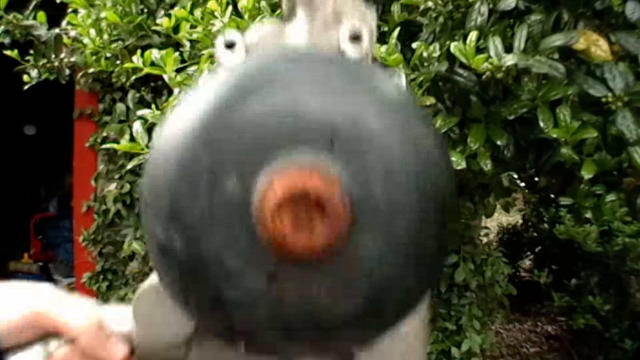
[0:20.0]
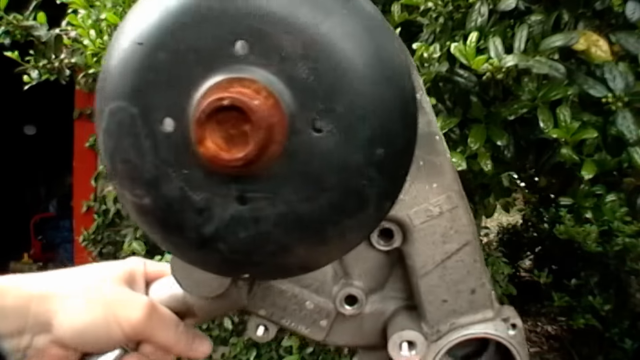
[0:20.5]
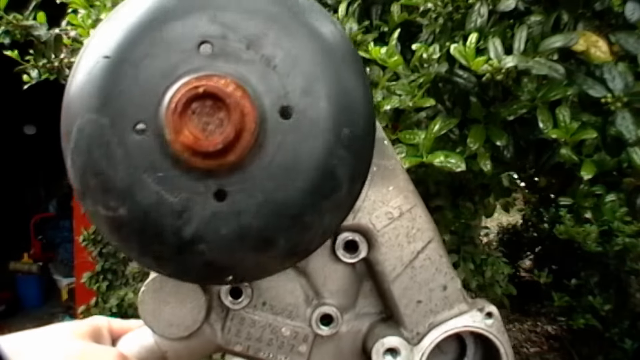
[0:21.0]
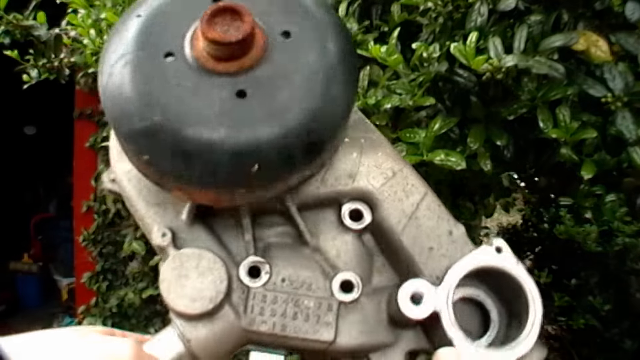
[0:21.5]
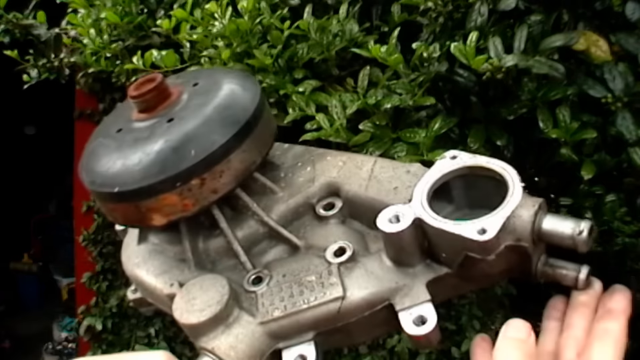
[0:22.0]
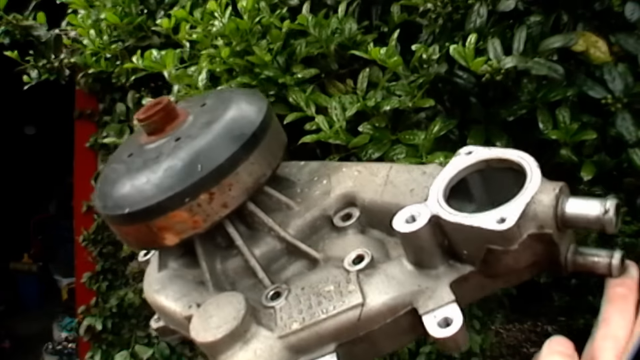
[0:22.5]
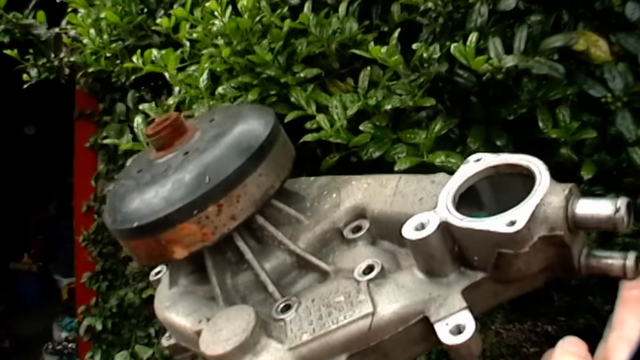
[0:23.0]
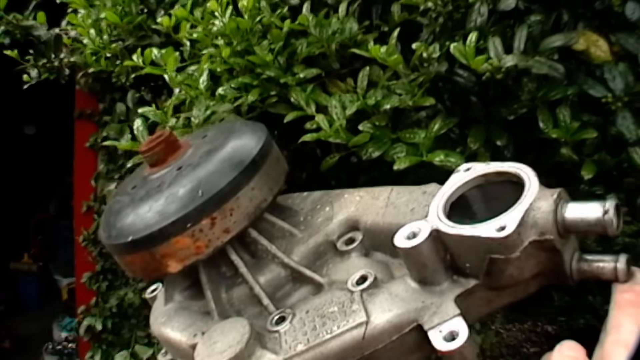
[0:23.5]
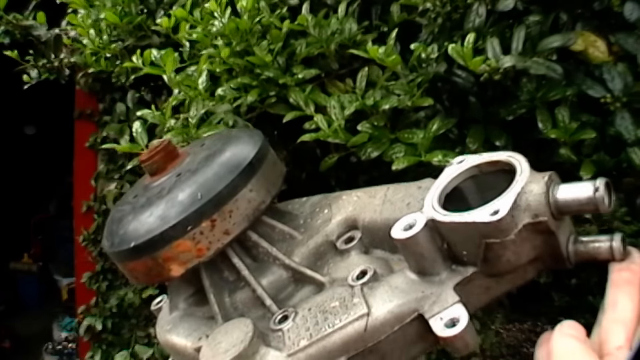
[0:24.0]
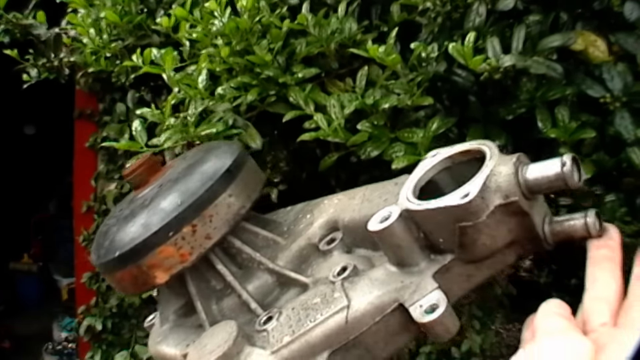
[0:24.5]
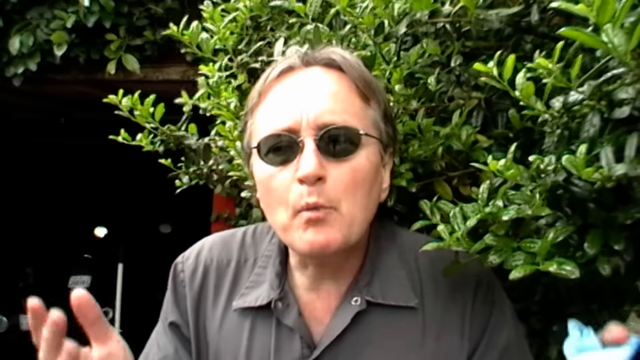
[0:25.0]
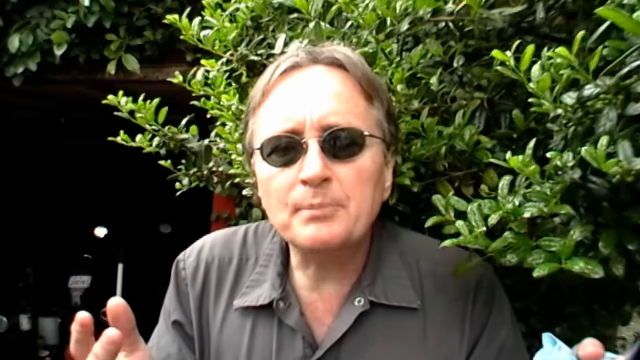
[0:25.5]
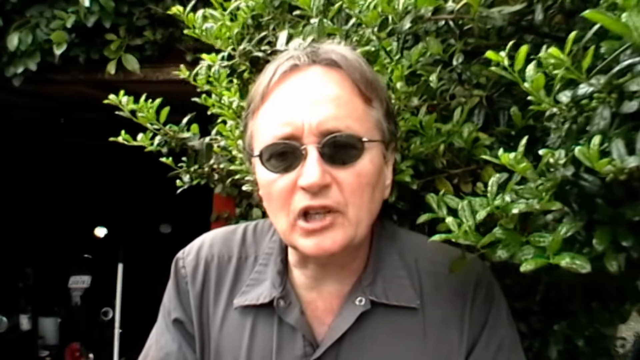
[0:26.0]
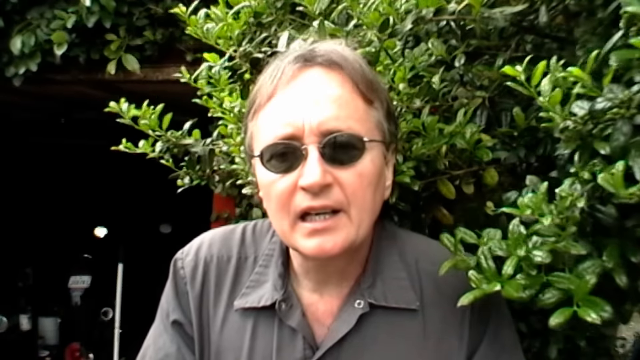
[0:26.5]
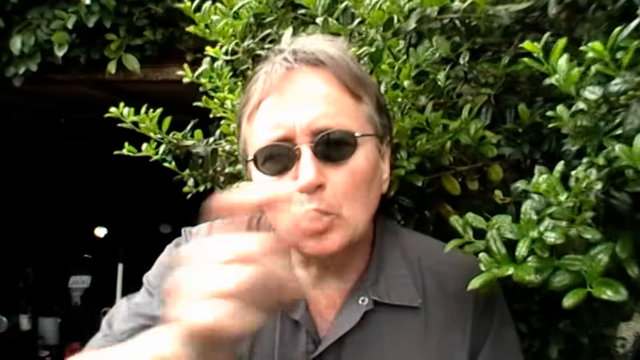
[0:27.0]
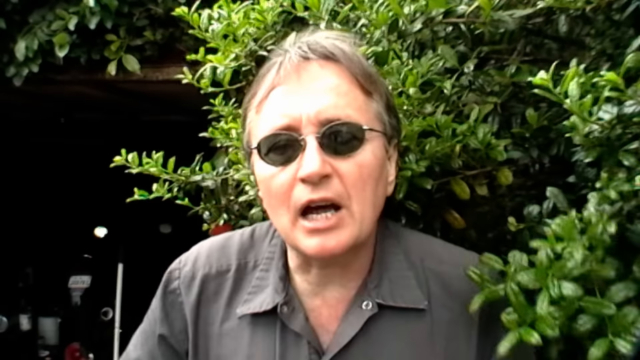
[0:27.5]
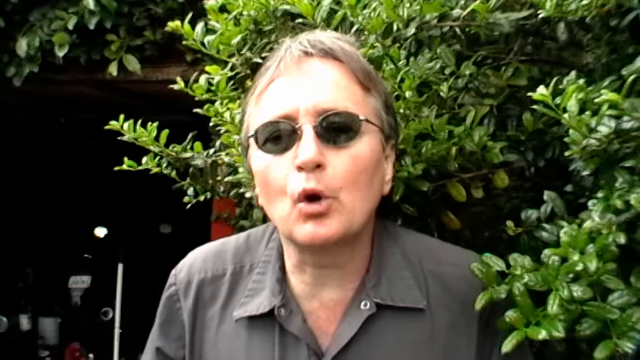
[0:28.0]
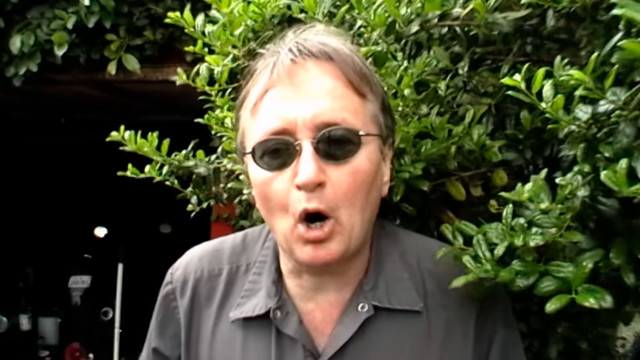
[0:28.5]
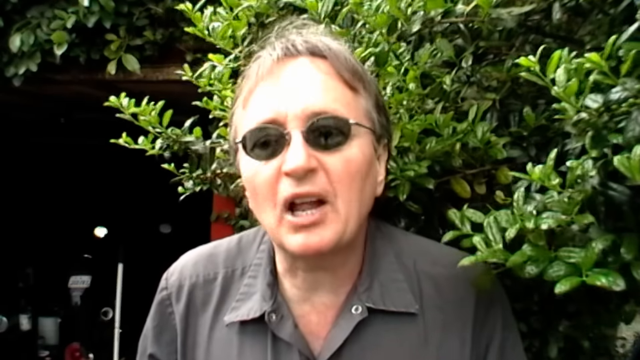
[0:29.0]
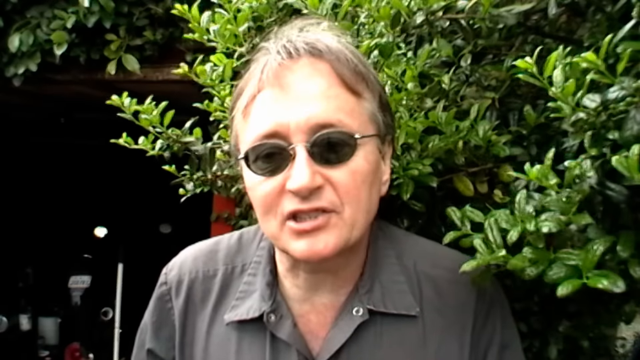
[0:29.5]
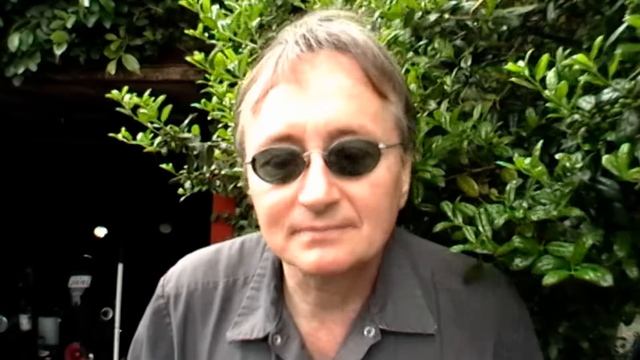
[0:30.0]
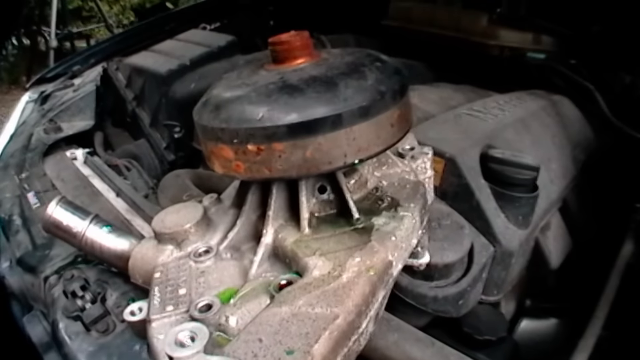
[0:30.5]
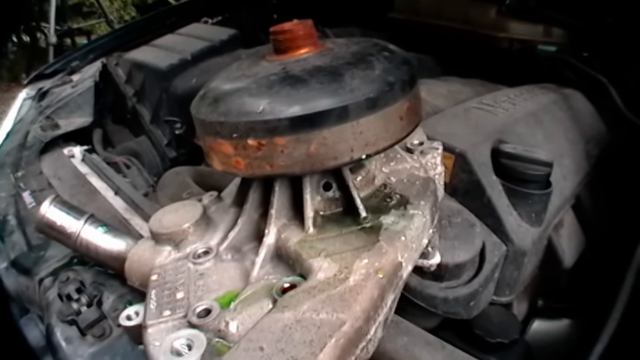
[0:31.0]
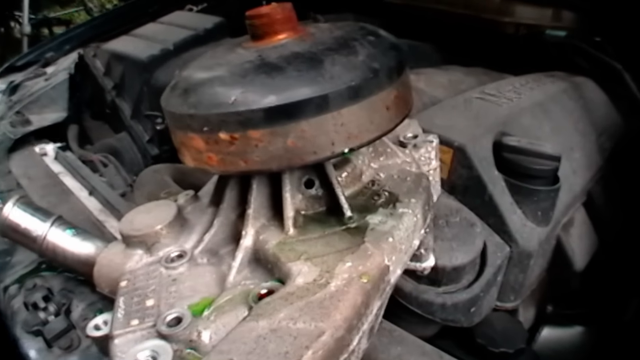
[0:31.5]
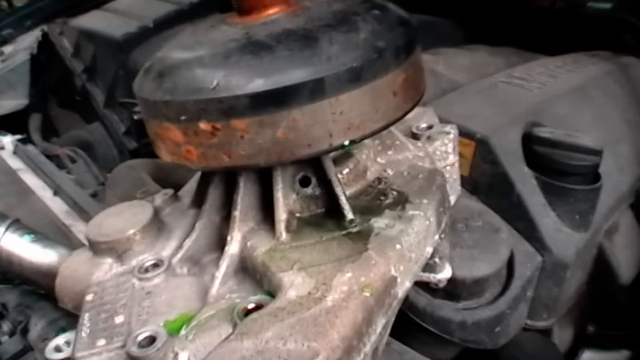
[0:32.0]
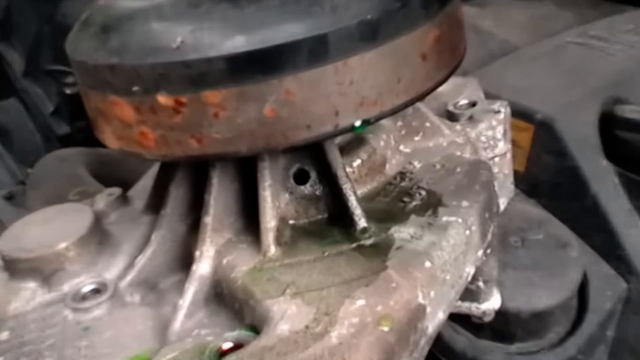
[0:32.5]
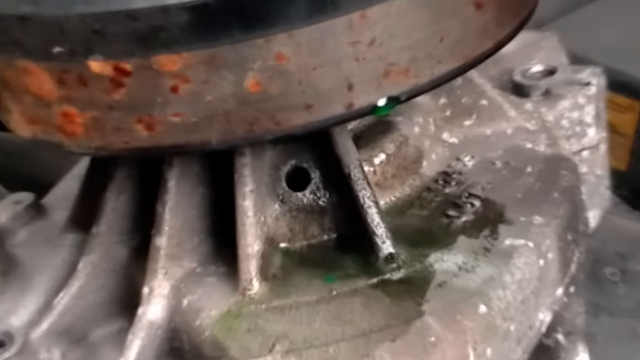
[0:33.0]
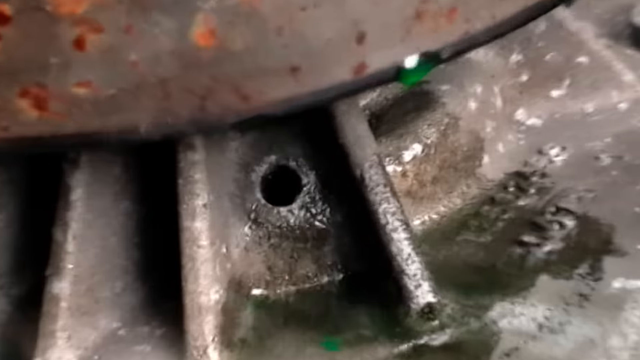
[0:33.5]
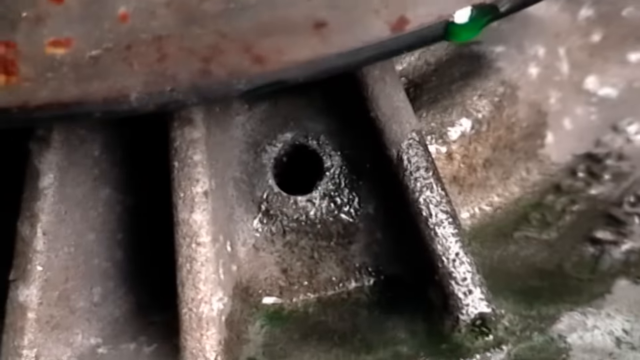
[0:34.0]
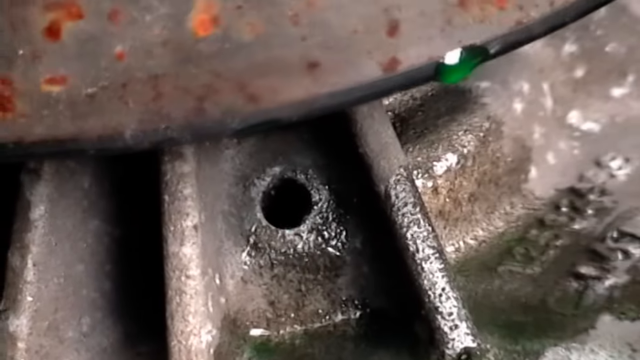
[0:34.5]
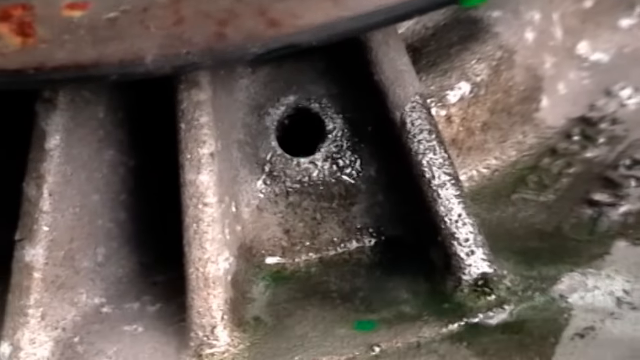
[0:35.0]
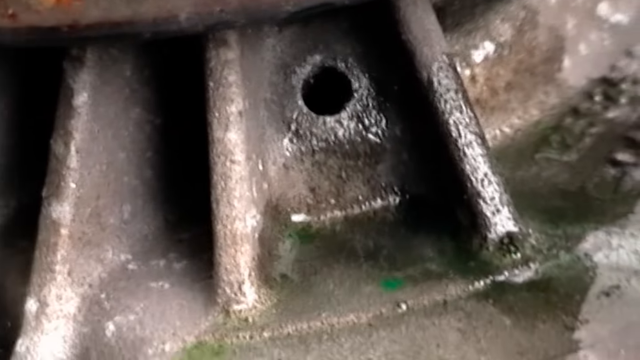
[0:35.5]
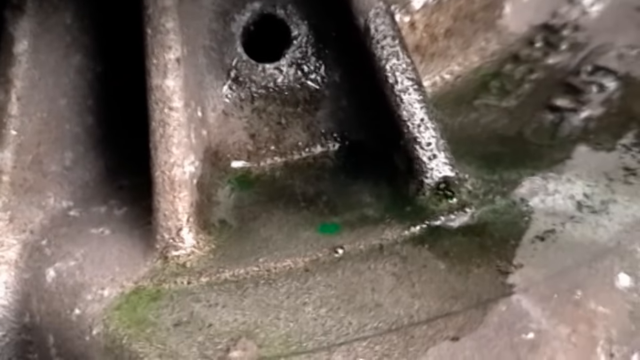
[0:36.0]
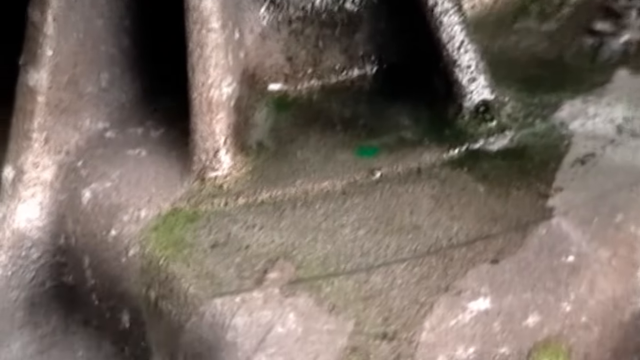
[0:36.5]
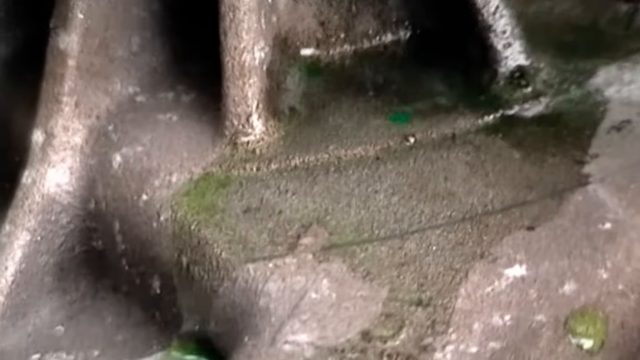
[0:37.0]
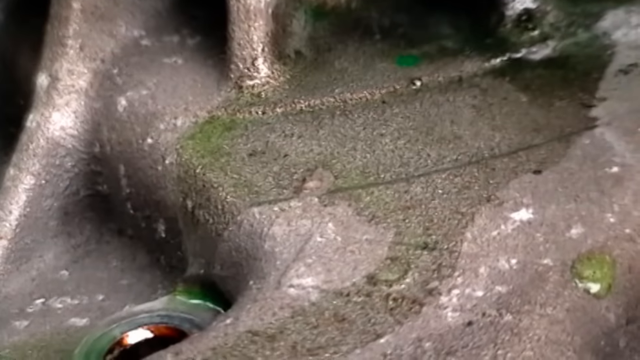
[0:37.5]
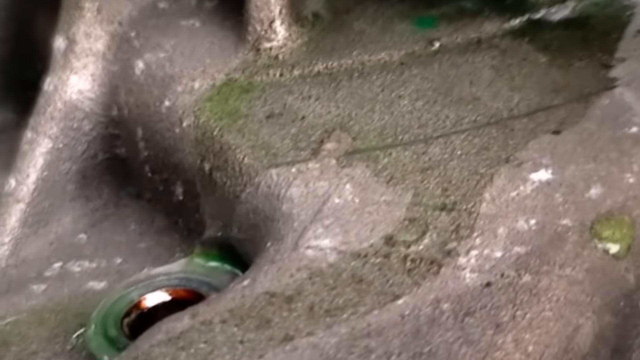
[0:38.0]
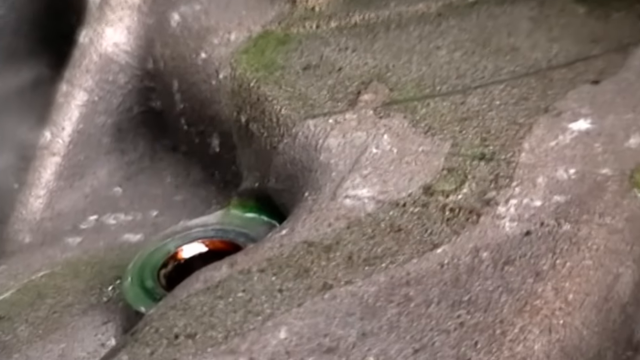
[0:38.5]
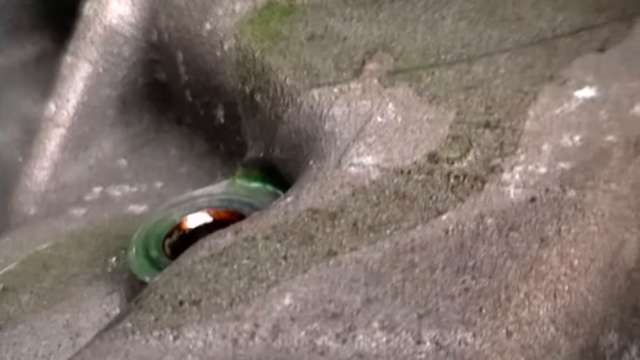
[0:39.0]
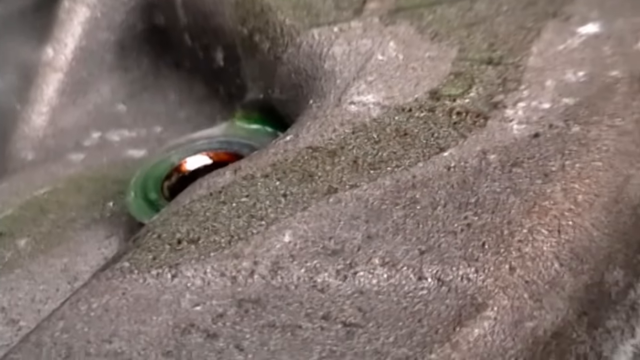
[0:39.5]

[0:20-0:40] What looks like a car or motorcycle part is shown. It is silver with a large black and rusted brown area at the top, and it has several areas that look like they should hold nuts and bolts, but they are empty; there are no nuts or bolts on the piece. A man stands in front of greenery, possibly a tree, talking to the camera, apparently about the part just shown. He wears dark sunglasses and a gray button-up shirt and has brown hair. The part is then shown inside the vehicle, sitting on top of a rusted gray engine, in close-up. It is all one piece and looks heavy. On top of the silver part is what looks almost like a bell, dark black on top and silver rust-colored at the bottom. It looks as if a hole has been drilled in the part, but no nut or bolt is attached to it.